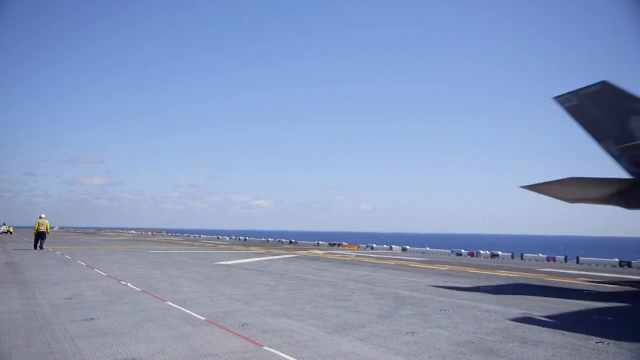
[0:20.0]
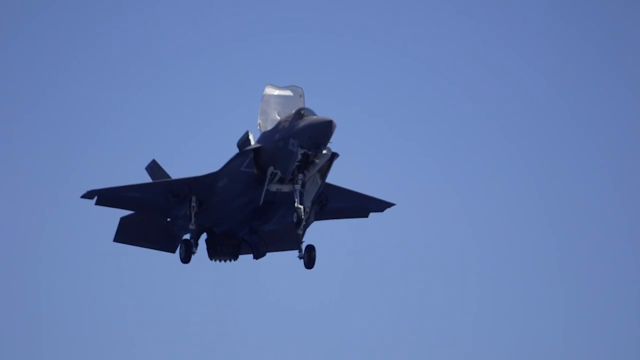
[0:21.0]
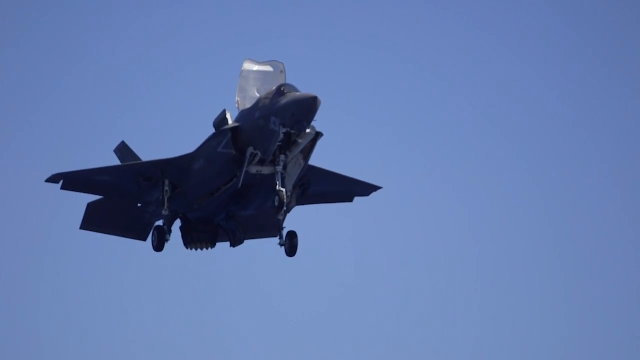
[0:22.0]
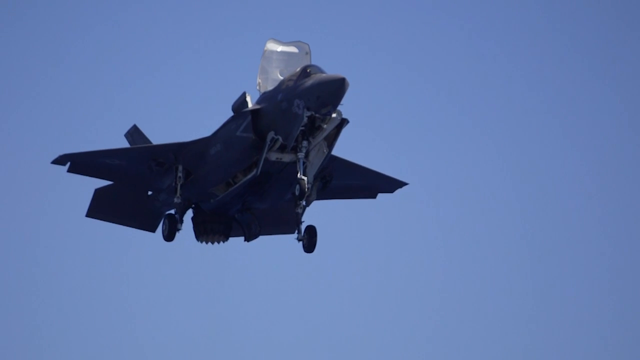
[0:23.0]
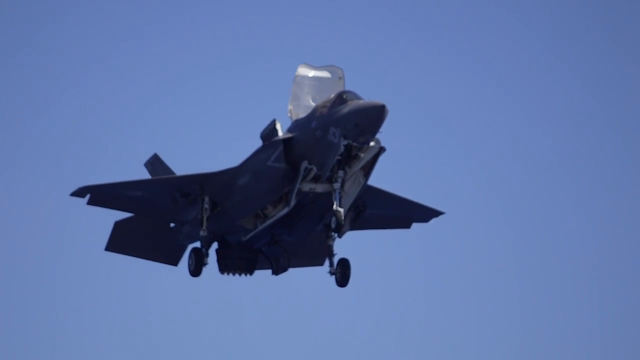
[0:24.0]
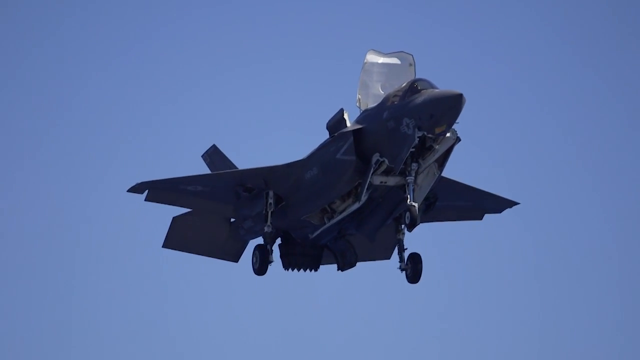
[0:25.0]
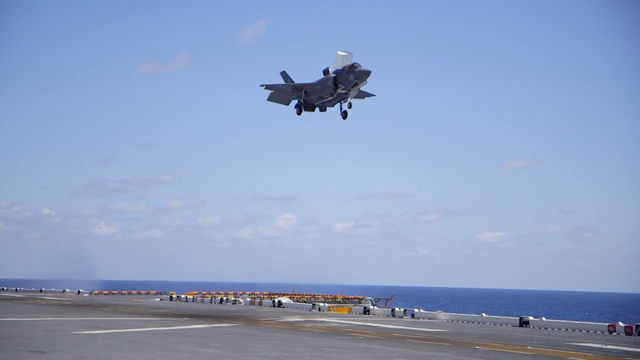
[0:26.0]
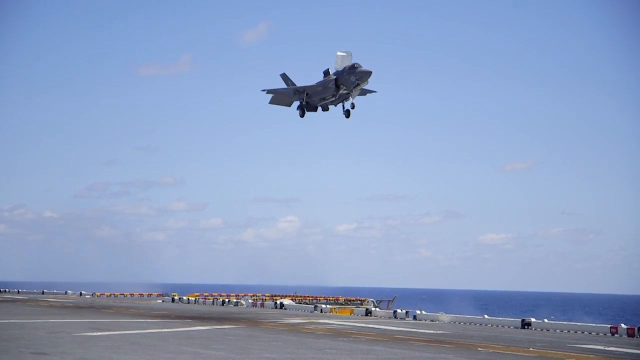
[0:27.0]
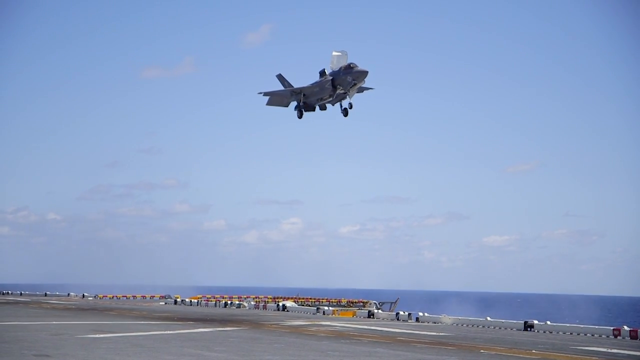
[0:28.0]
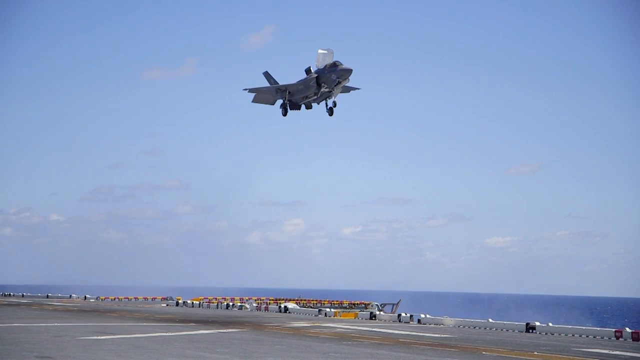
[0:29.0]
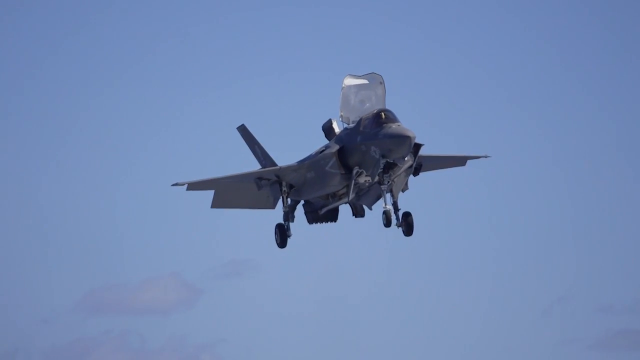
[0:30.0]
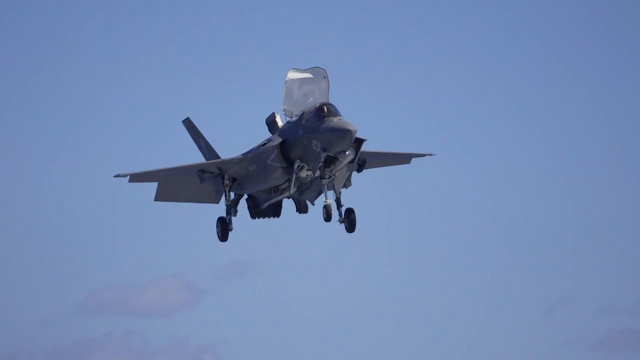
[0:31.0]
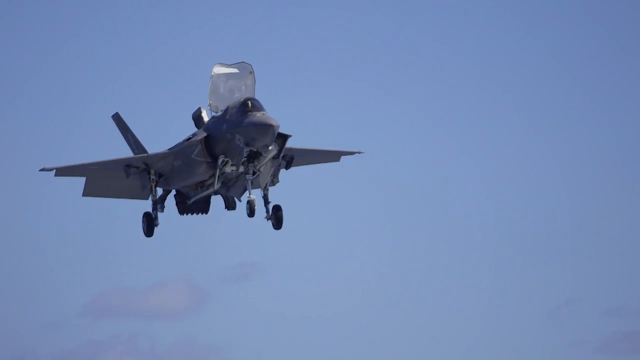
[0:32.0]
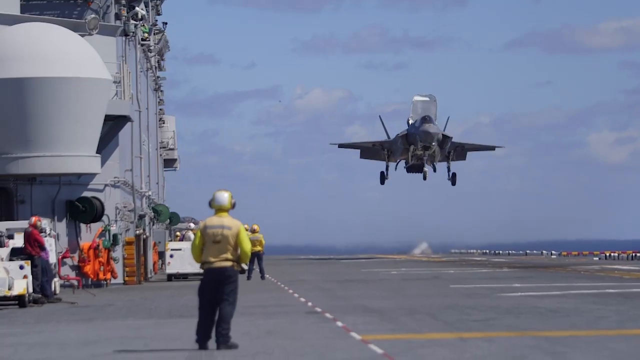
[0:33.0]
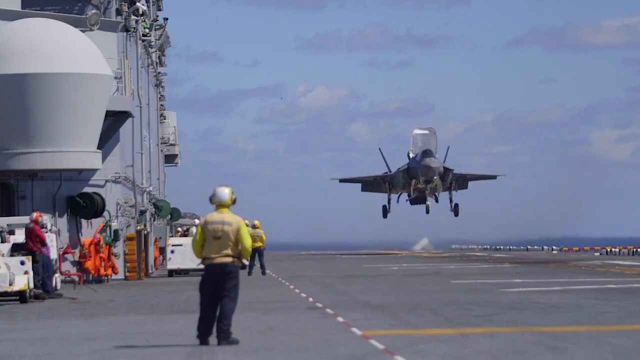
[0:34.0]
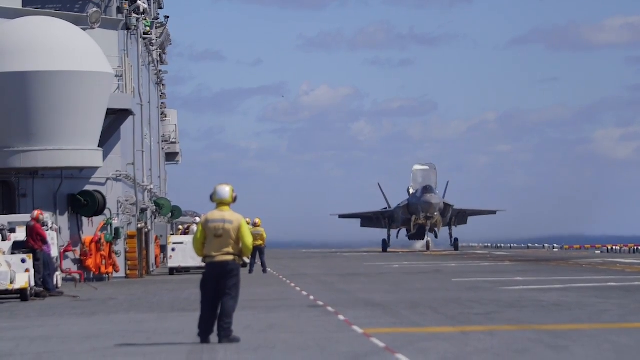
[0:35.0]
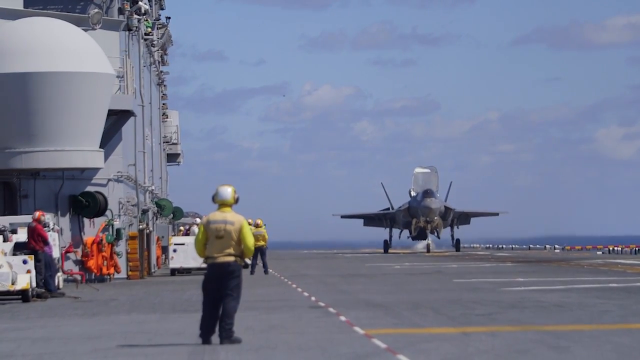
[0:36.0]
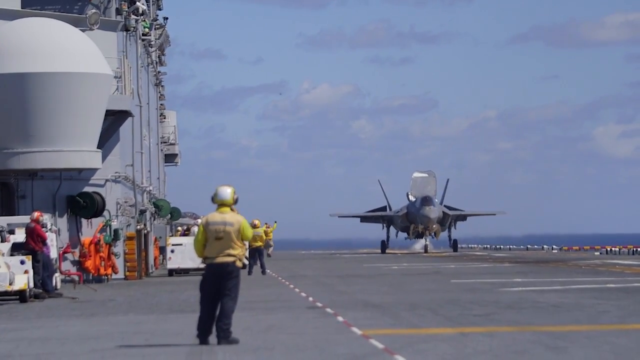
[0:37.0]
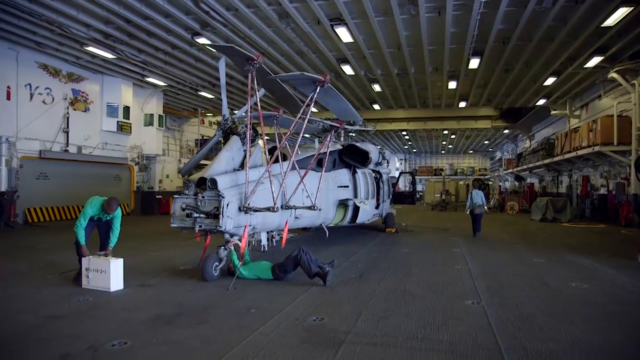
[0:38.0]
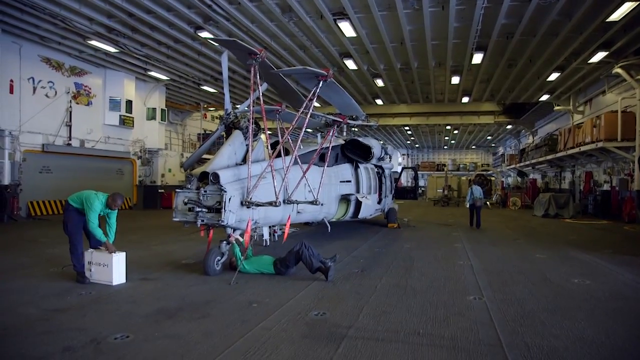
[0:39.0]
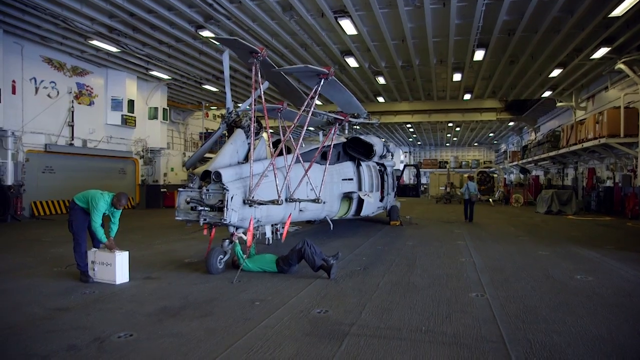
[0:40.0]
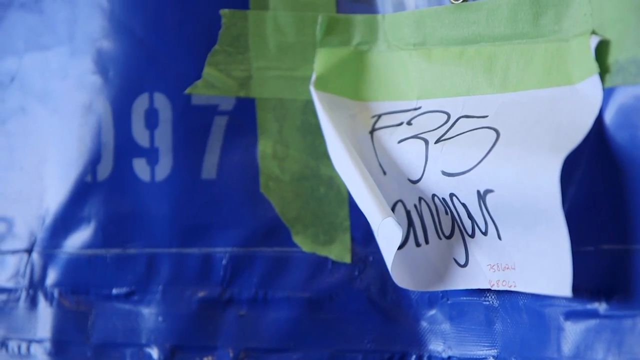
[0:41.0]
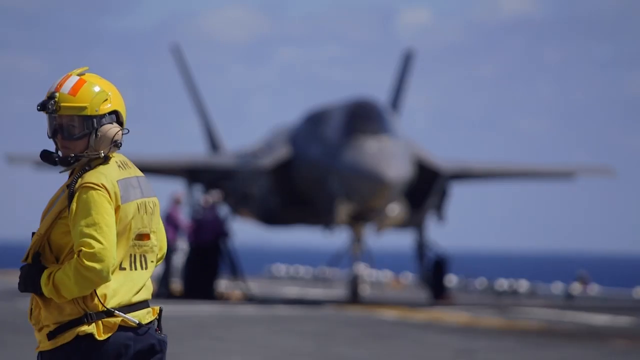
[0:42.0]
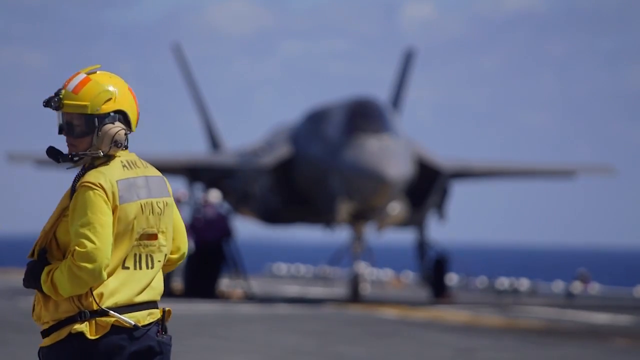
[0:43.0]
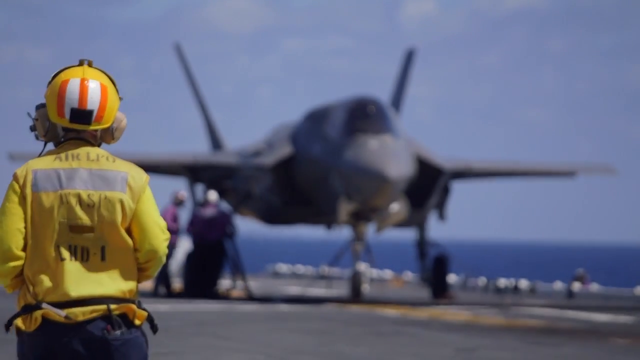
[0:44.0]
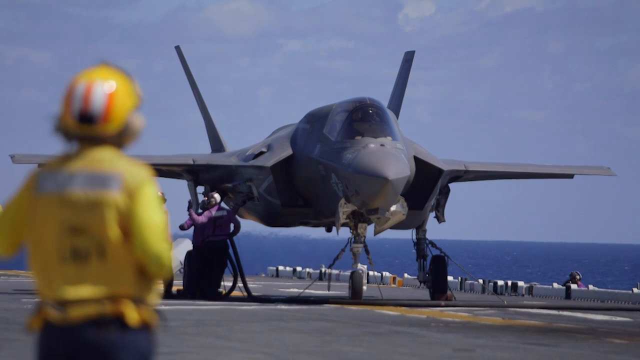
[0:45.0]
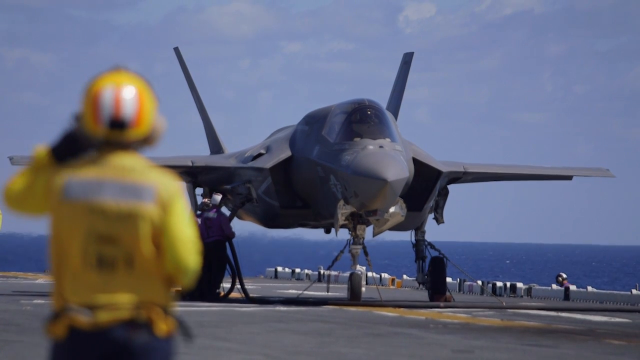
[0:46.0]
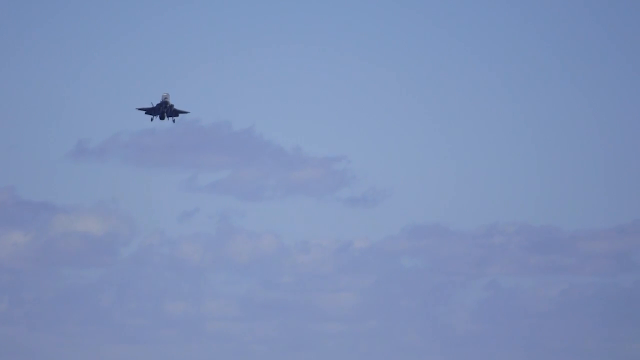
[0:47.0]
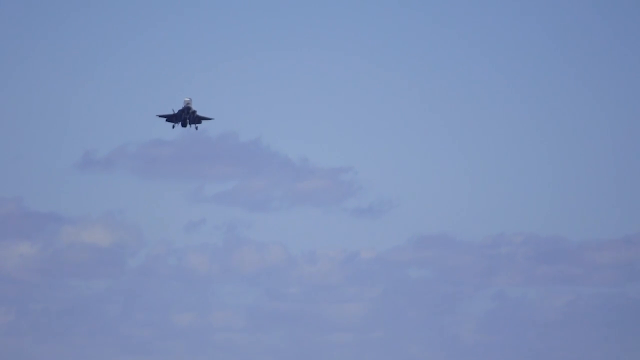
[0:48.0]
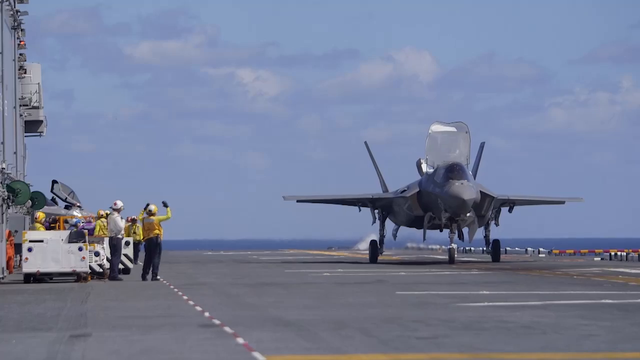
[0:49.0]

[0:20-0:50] A jet is shown in the air from underneath, the view looking upward with the jet in the middle. The jet is very dark, black in color, and hovers above the flight deck of the carrier, almost as if floating. It positions itself downward and moves to the left. A different angle follows, taken from the flight deck itself. On the left side is a row of people who appear to be wearing helmets, yellow jackets or vests, dark pants and earmuffs. Also to the left is a light gray building that looks very large. To the right, the jet lands vertically, going straight downward onto the carrier almost like it is floating in the air. After the jet lands on the flight deck, the people start walking toward it. The scene changes to people working in what looks like a large garage or large indoor area; one person is on his back in the middle, looking upward and fixing an area of an airplane or jet. Next, a person on the left side wears a yellow helmet and a yellow jacket. In the blurry background is the jet, with people underneath it refueling it. The scene then changes to the jet up in the air, flying.